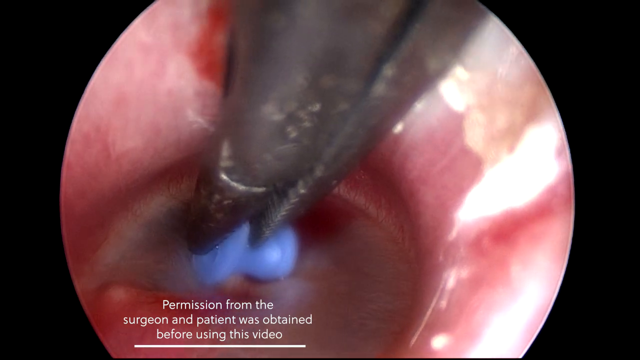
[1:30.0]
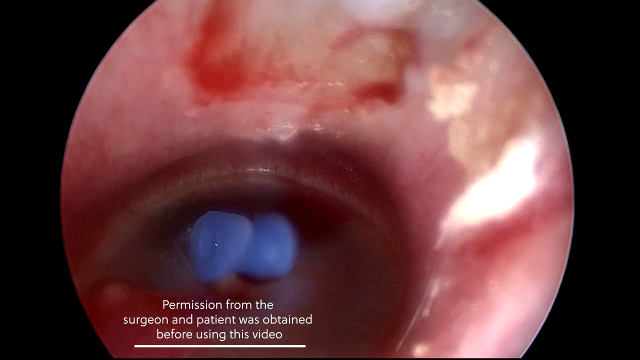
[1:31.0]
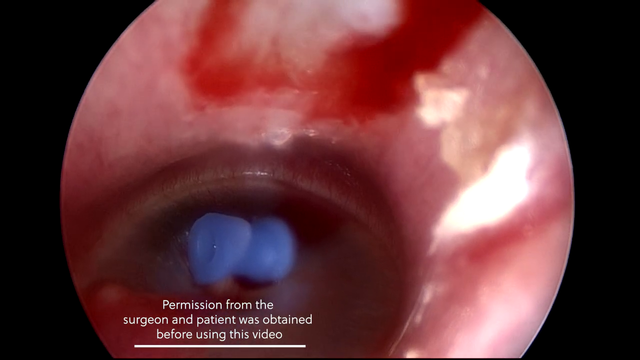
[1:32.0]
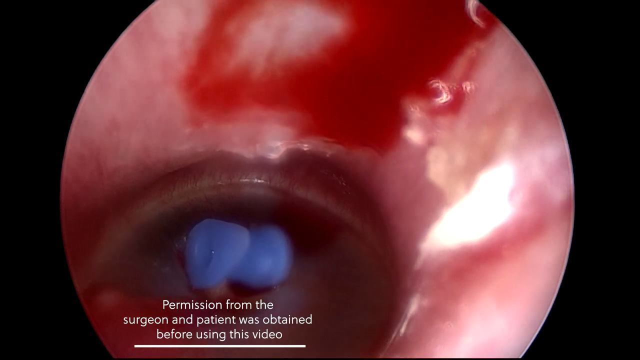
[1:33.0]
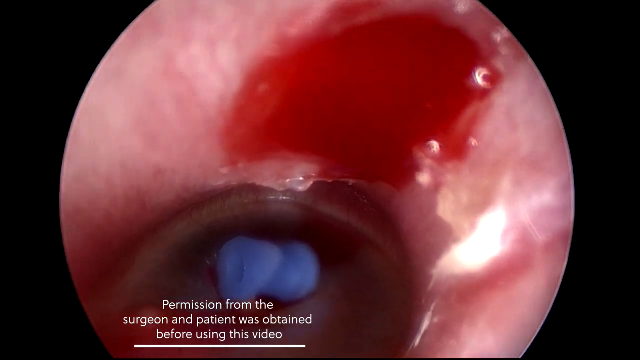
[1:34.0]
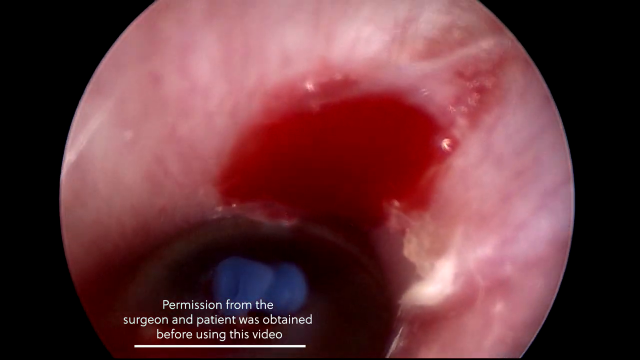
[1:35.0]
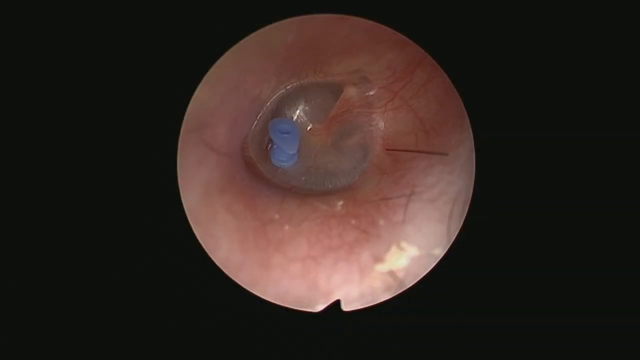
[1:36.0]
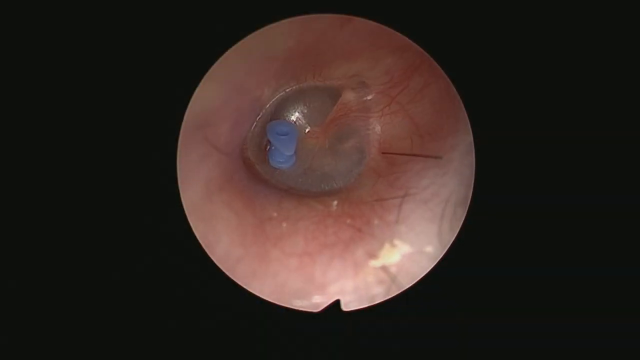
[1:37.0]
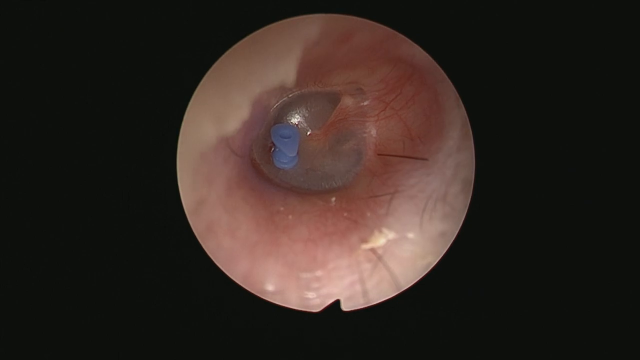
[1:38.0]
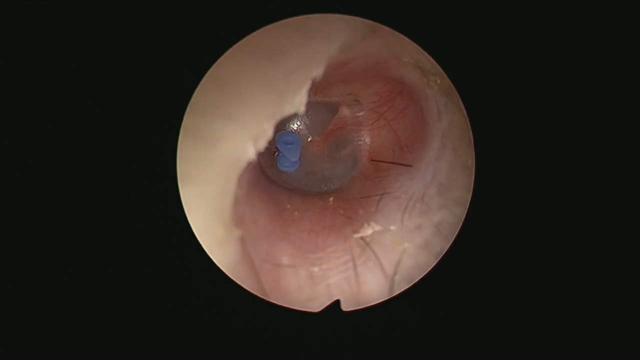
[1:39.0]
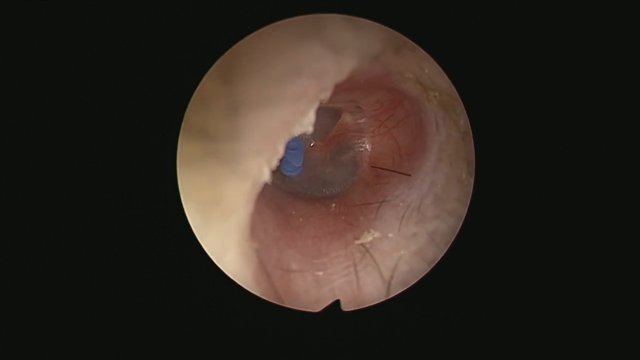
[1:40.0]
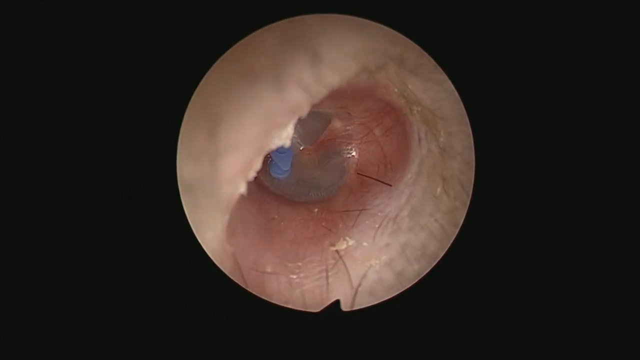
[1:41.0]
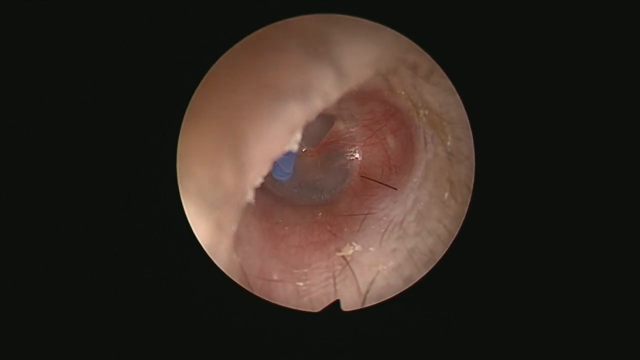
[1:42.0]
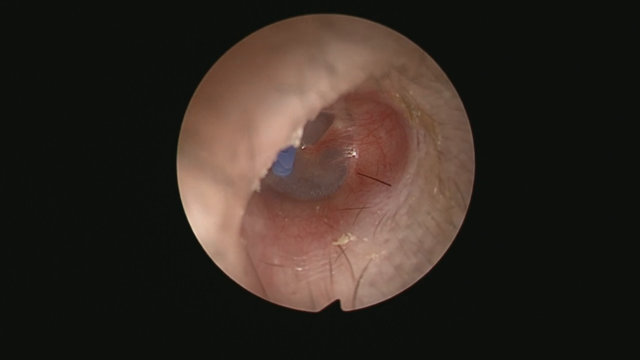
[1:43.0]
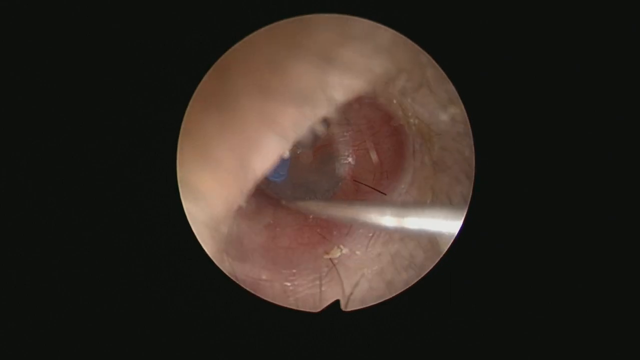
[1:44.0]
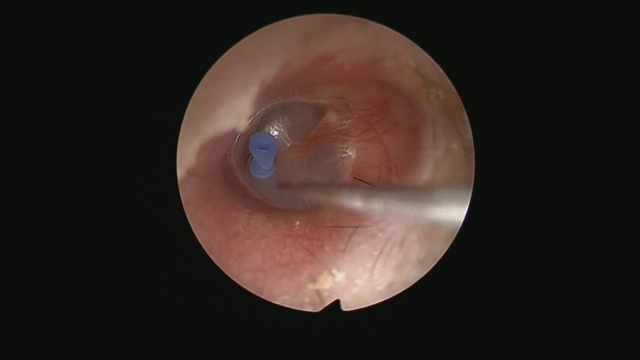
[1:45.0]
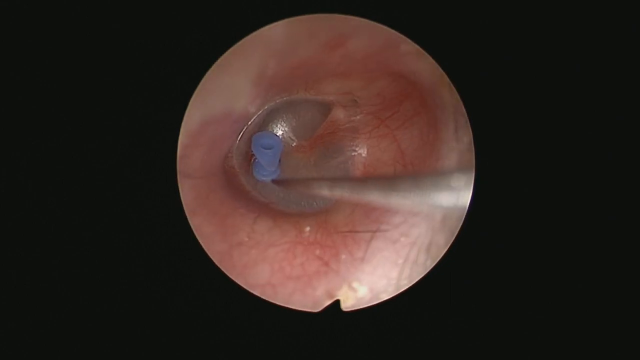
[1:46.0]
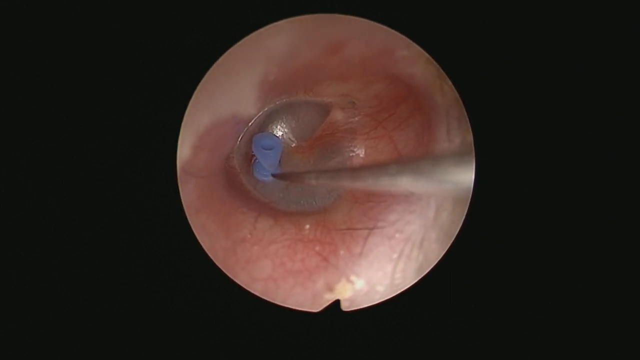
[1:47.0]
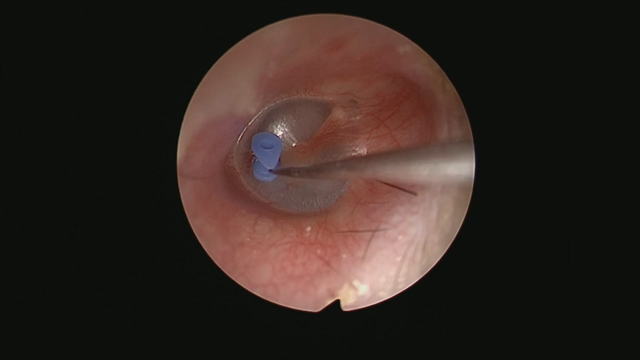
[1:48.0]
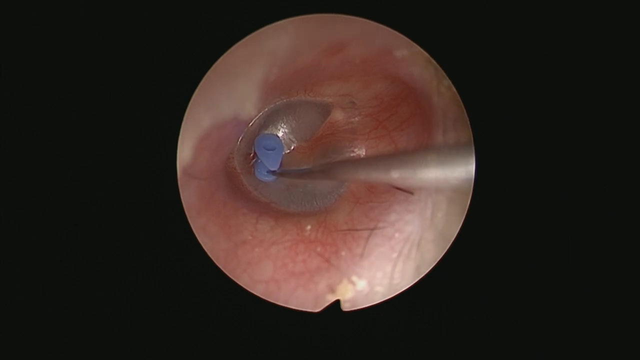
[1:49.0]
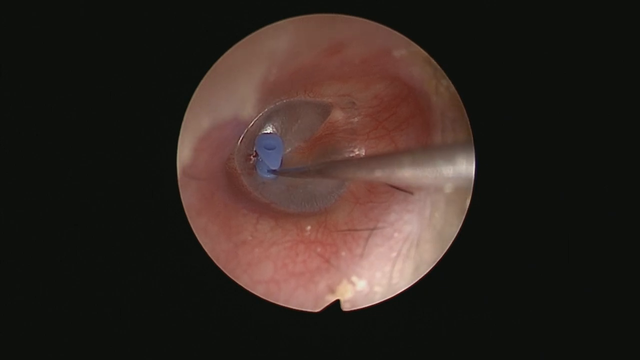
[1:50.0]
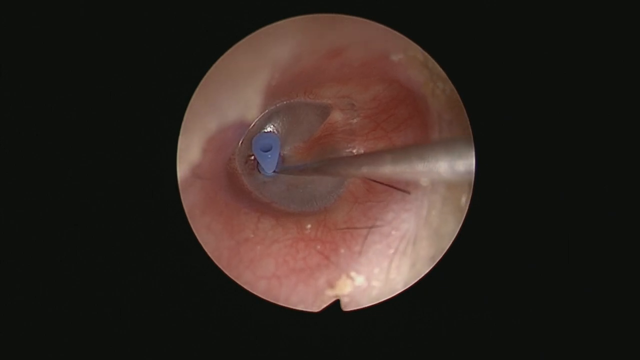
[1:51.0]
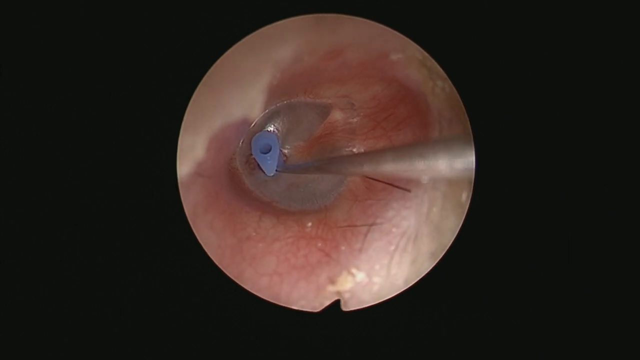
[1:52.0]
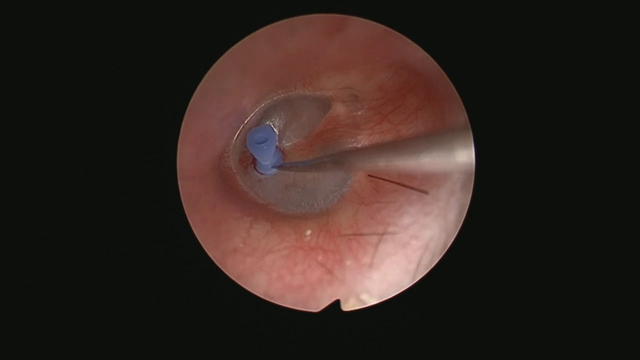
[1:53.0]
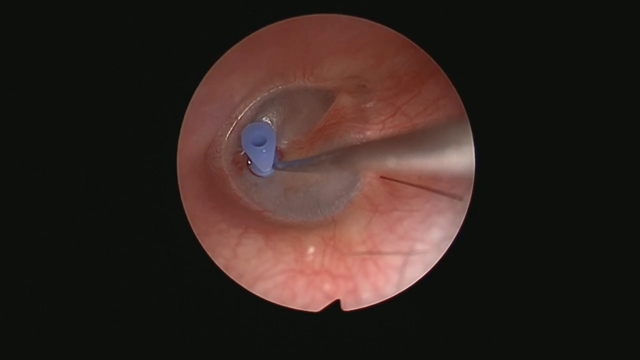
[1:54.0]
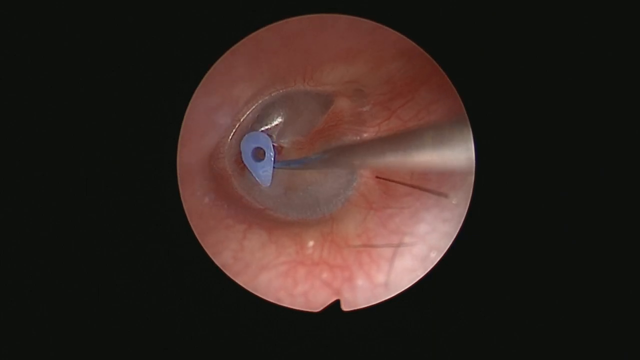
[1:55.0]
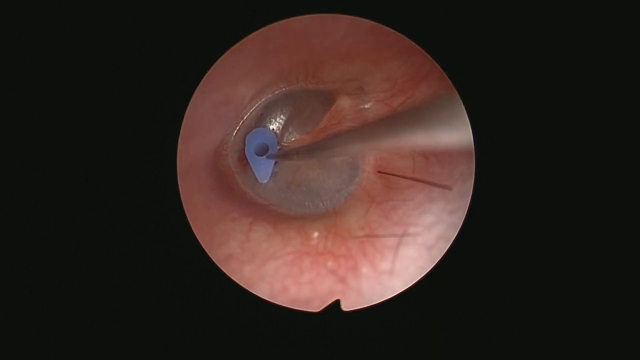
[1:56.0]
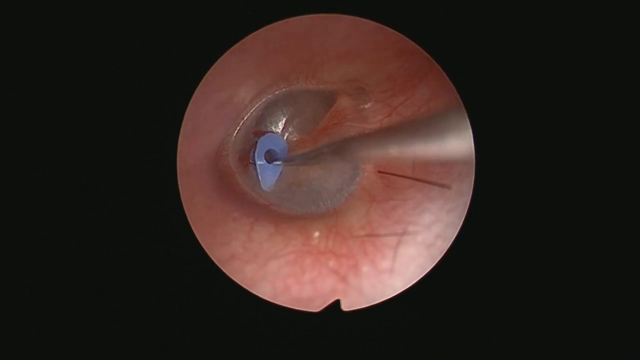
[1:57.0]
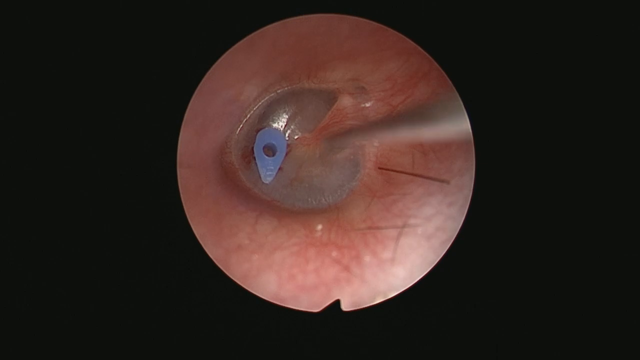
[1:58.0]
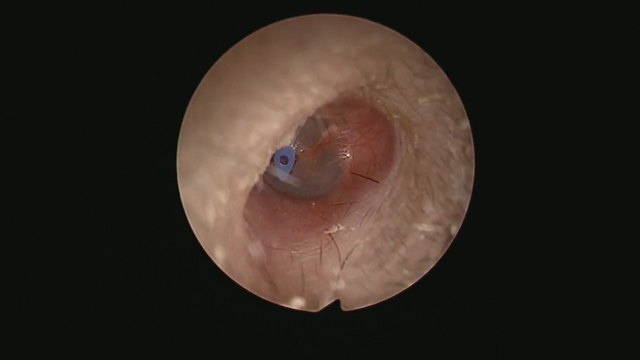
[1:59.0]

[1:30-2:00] The grommet is pushed into the sack in the ear, with the text about permission from the surgeon and patient still shown. Suddenly a lot of blood begins to pool when the equipment is pulled out. The ear canal is then seen from a different view, with the grommet in the ear. A different tool comes into the ear, takes hold of the grommet and pushes it into the little sack, and then the equipment is removed. A little bit of blood pools around the grommet as it is inserted. Lots of hair and matter in the ear are visible as the camera retracts from the ear.